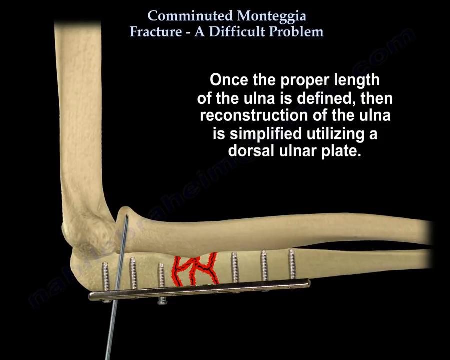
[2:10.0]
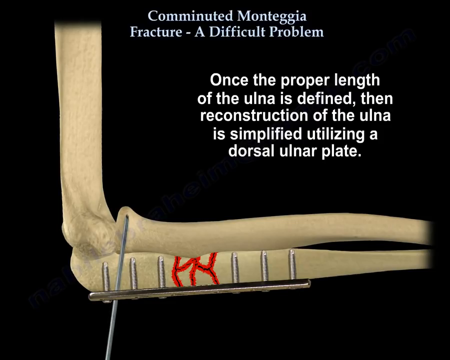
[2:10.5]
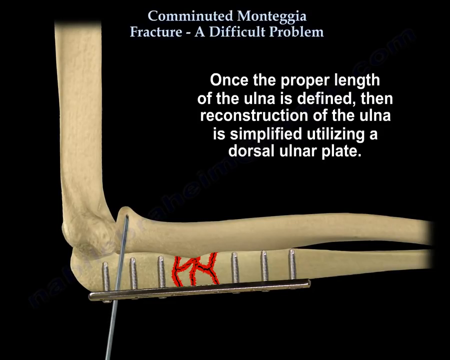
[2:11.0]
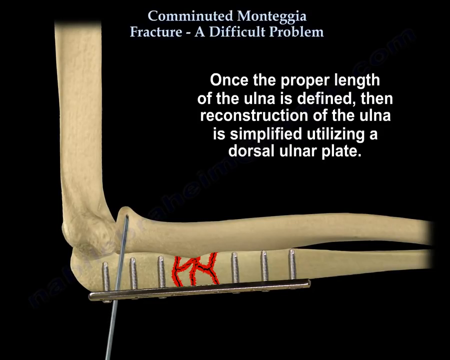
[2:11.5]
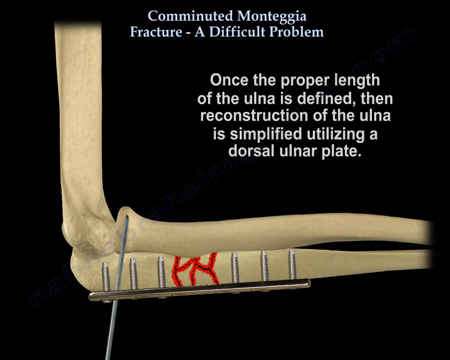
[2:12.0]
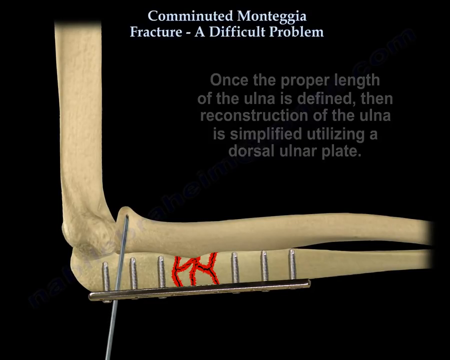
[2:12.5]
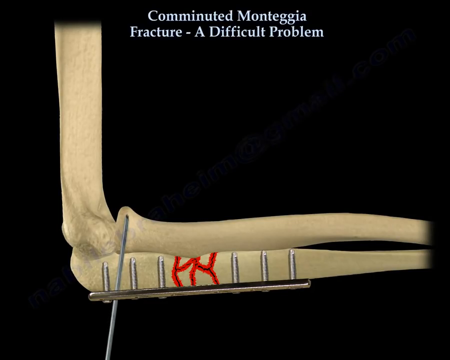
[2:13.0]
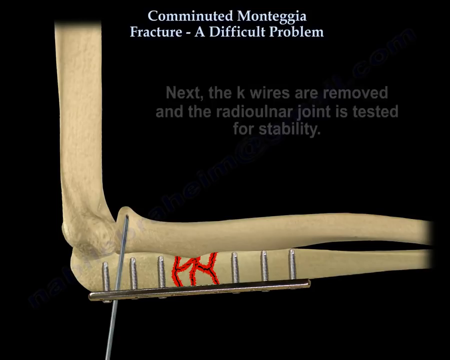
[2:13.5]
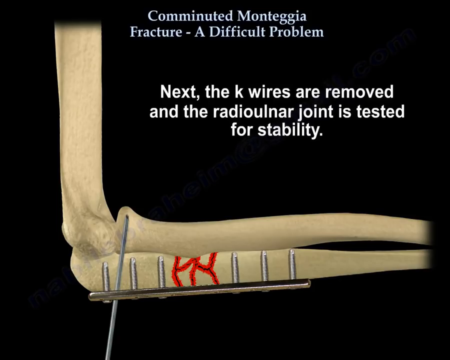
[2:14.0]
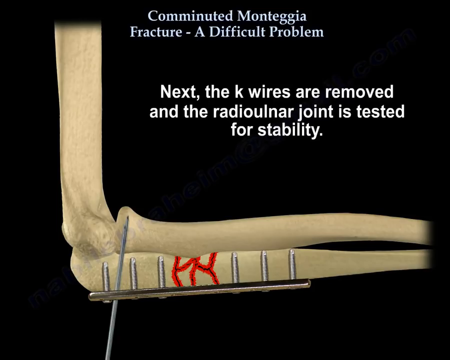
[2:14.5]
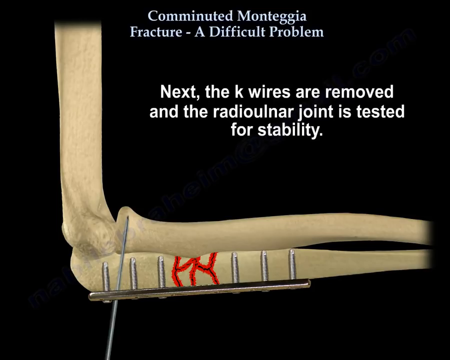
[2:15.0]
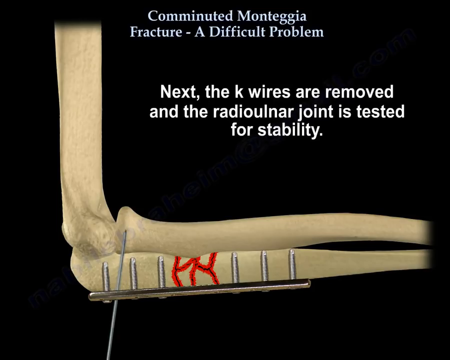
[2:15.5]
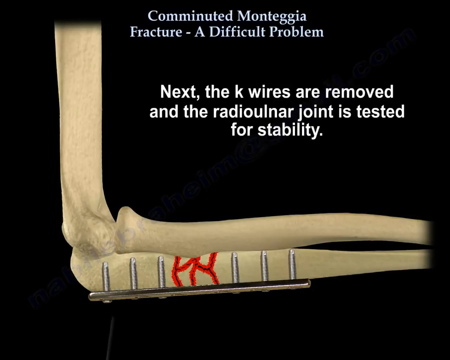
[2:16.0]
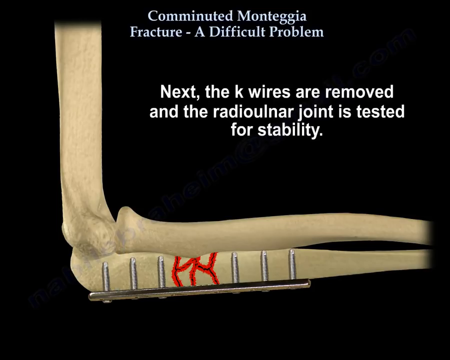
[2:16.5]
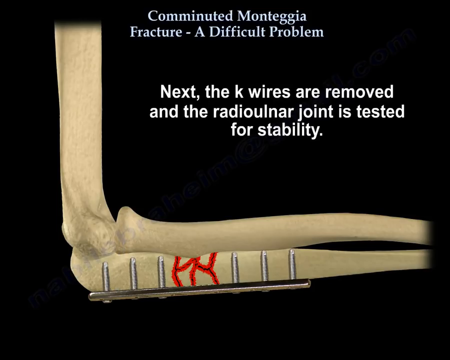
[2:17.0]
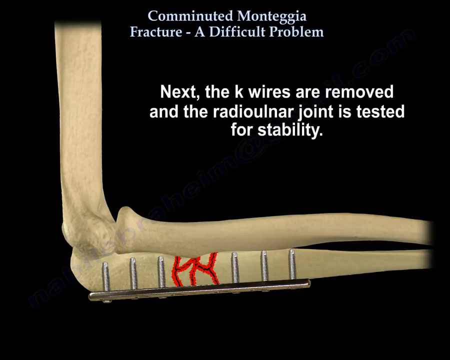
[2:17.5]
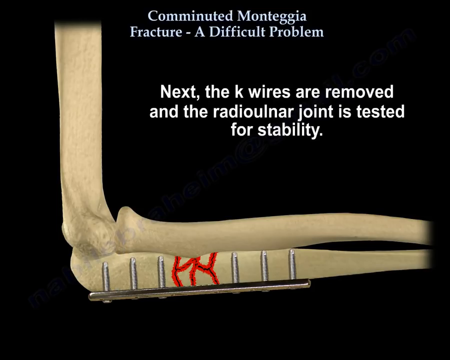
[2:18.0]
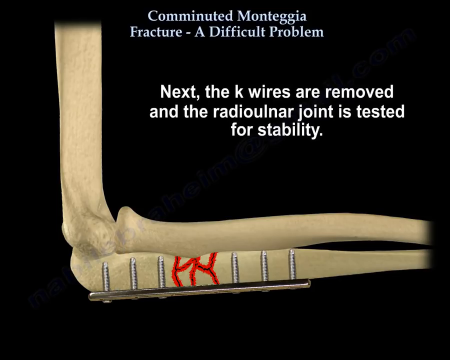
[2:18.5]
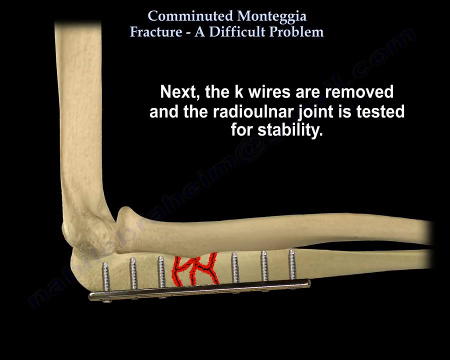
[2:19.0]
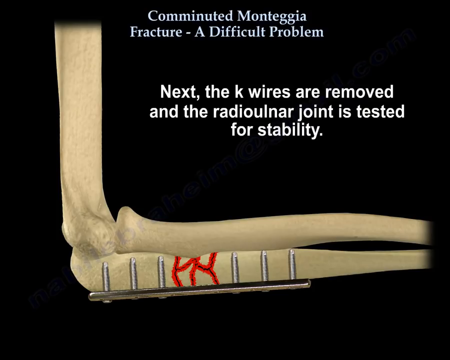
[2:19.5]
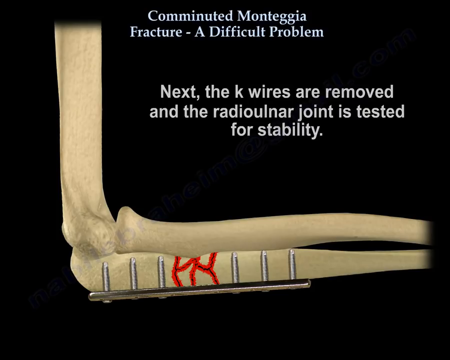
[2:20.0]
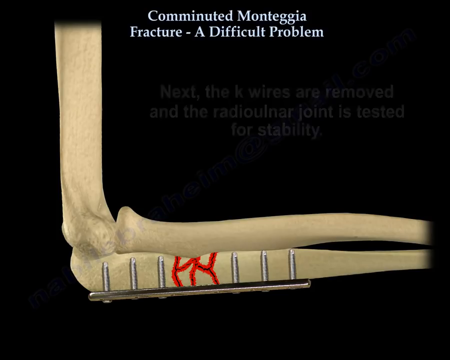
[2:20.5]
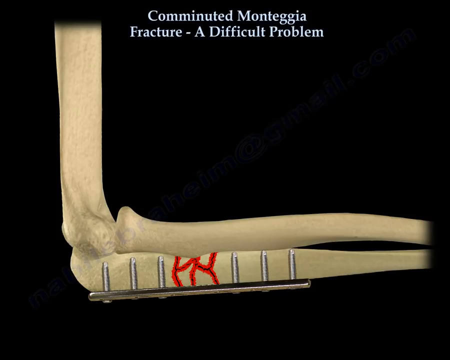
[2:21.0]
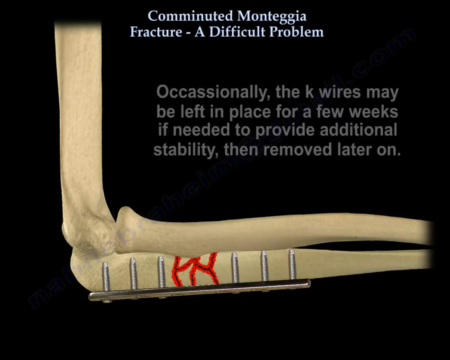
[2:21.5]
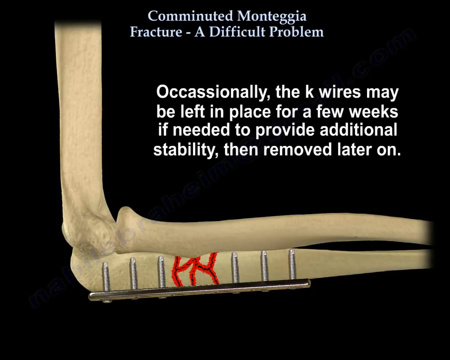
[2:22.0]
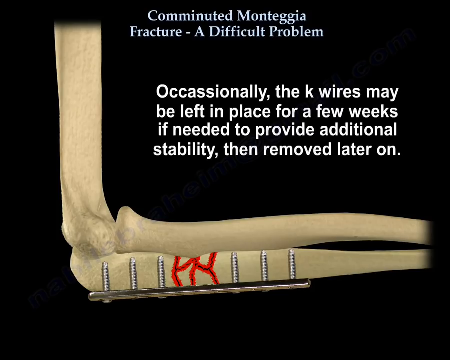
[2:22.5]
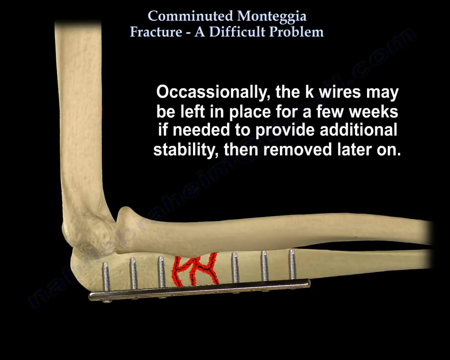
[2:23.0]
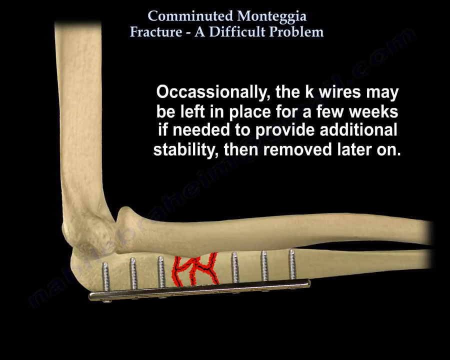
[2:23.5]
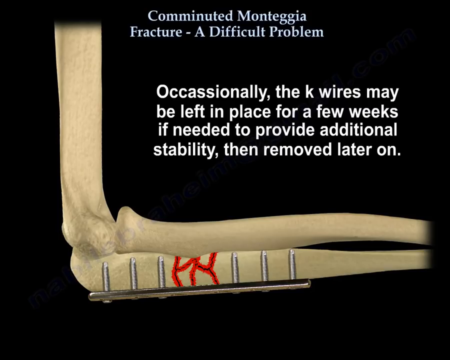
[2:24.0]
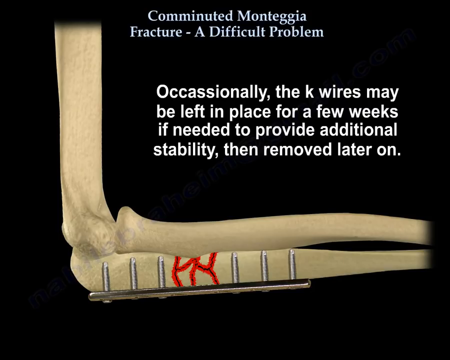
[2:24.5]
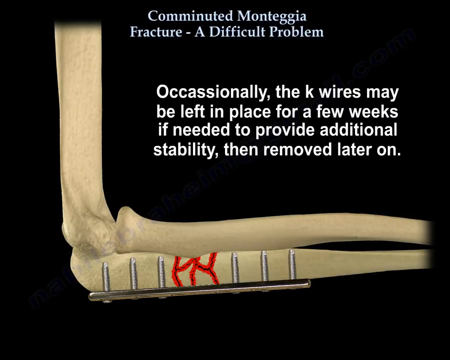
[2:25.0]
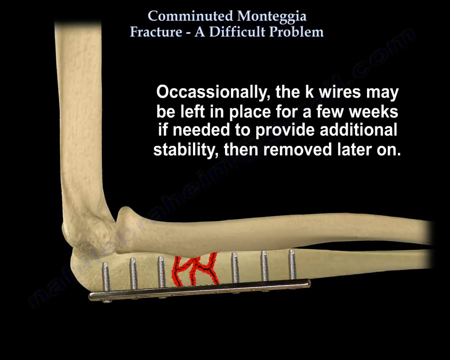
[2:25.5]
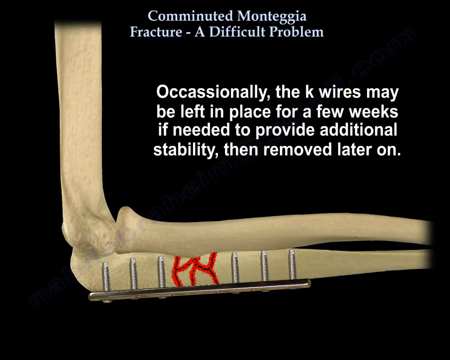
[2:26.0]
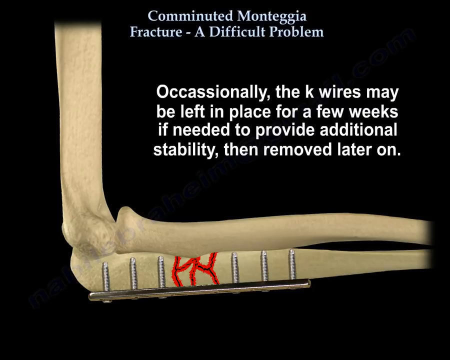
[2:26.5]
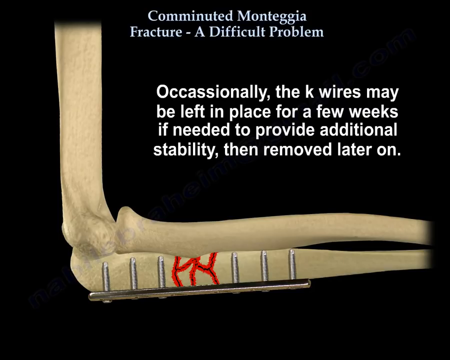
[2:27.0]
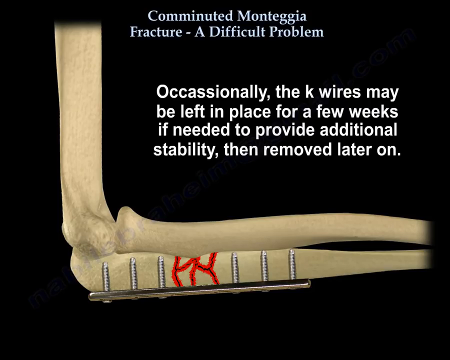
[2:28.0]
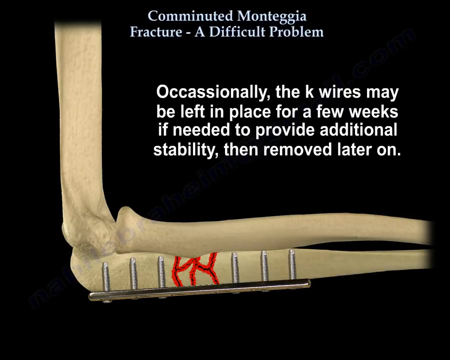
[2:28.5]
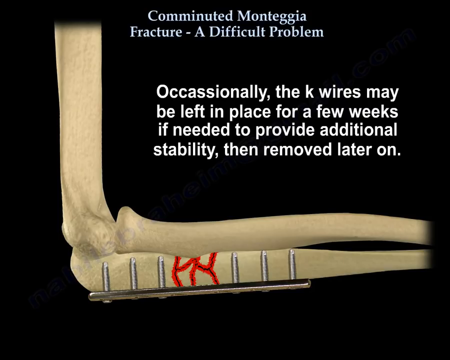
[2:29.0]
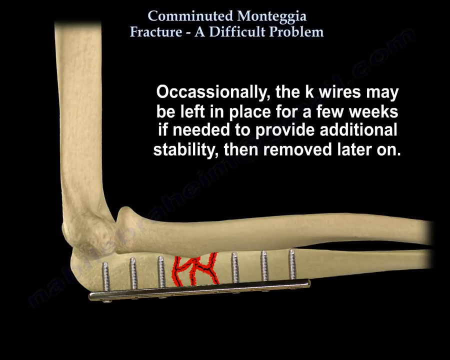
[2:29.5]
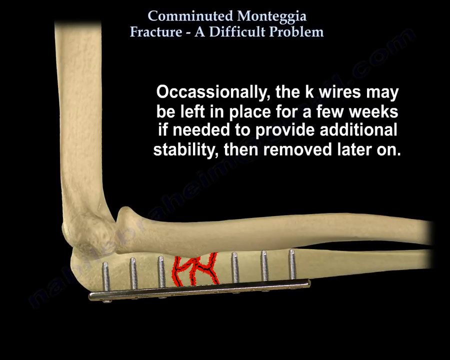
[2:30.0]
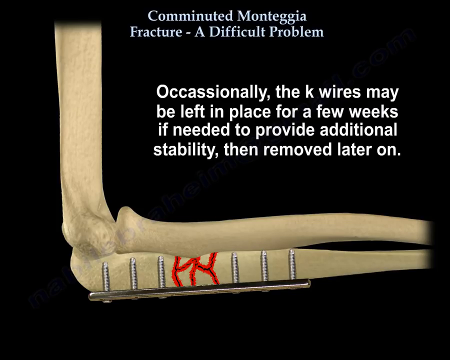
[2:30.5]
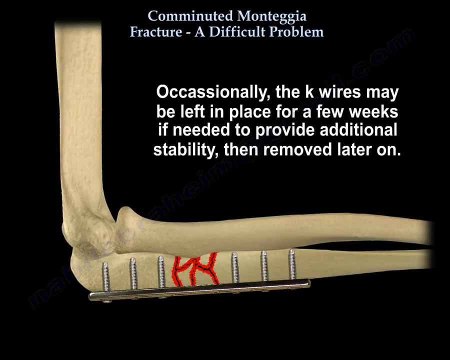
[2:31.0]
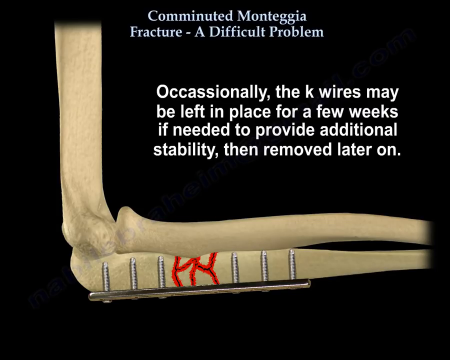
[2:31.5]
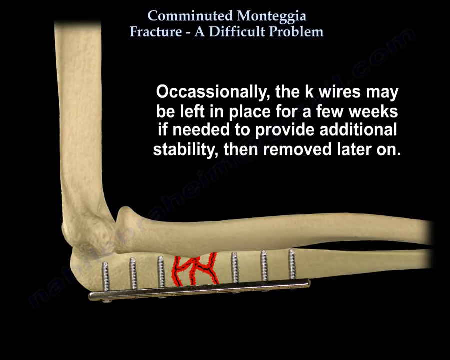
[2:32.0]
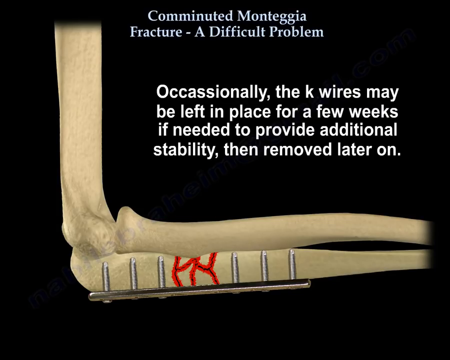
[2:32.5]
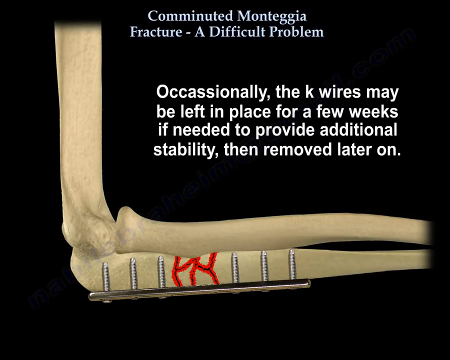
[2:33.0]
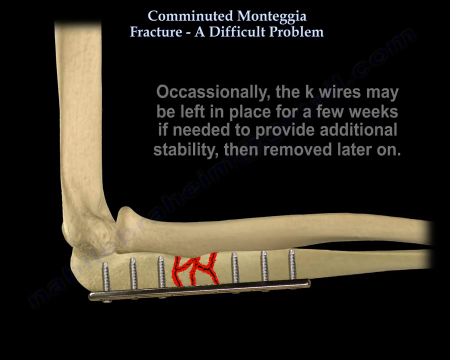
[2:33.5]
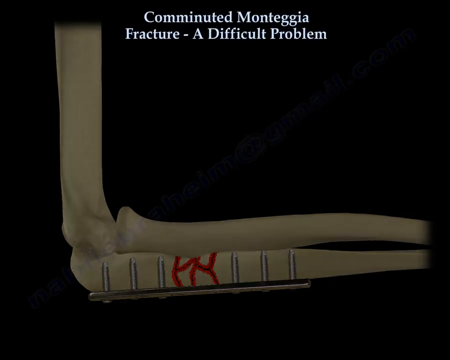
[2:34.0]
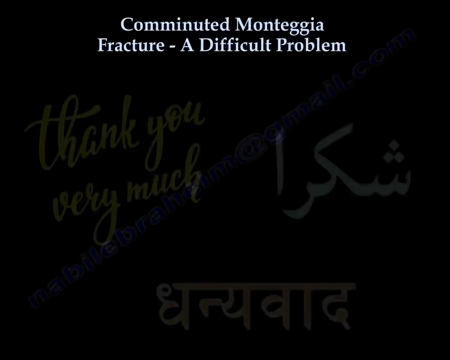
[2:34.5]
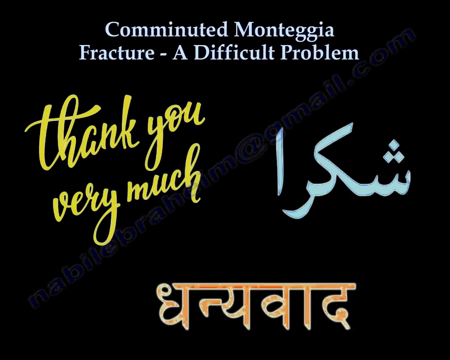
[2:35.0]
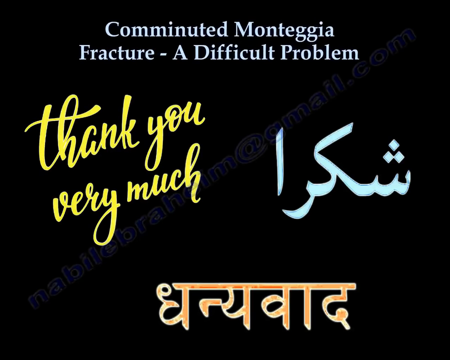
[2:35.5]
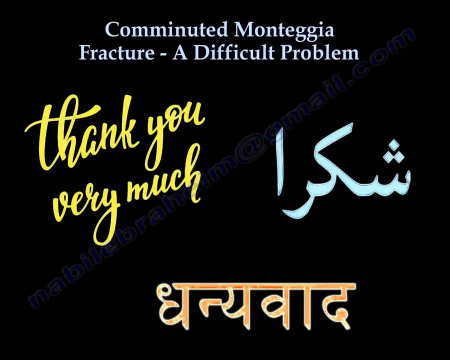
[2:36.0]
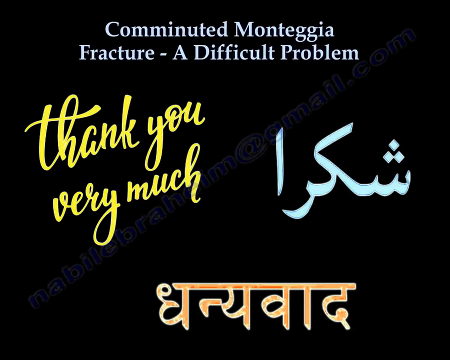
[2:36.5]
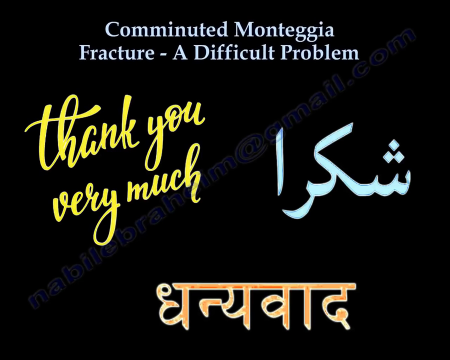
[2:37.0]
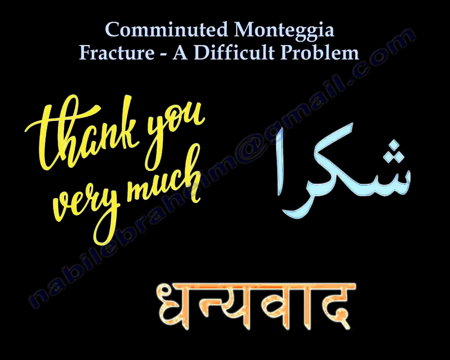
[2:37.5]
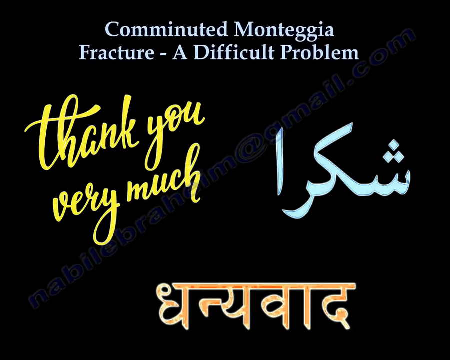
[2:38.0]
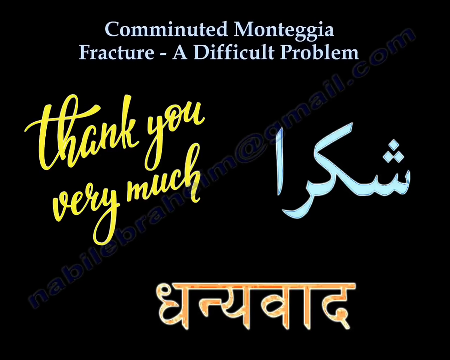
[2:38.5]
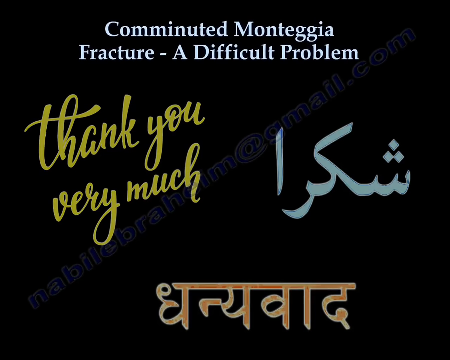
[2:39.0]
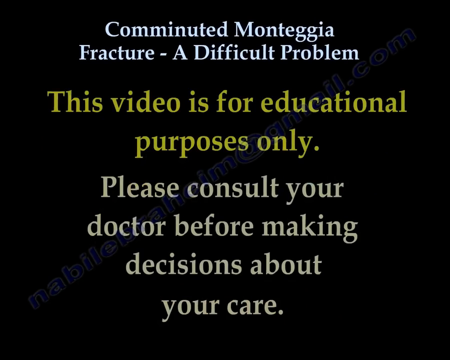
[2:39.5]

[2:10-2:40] The top heading remains, and on the right of the screen white text reads "once the proper length of the ulna is defined, then reconstruction of the ulna is simplified utilizing a dorsal ulna plate." A slightly thicker set of bones is depicted: the vertical top of the arm bone leading to the joint, the top bone, the elbow and the bottom bone. The metal plate is below the bottom bone, with six screws, three on either side of the break. A pin moves through the plate, through the bottom bone and into the top bone. The text reads "Next, the K wires are removed and the radio ulna joint is tested for stability." The graphic then changes, with the text reading "Occasionally, the K wires may be left in place for a few weeks, if needed, to provide additional stability, then removed later on." The graphic now shows the plate and the six screws, but no longer the bar between.